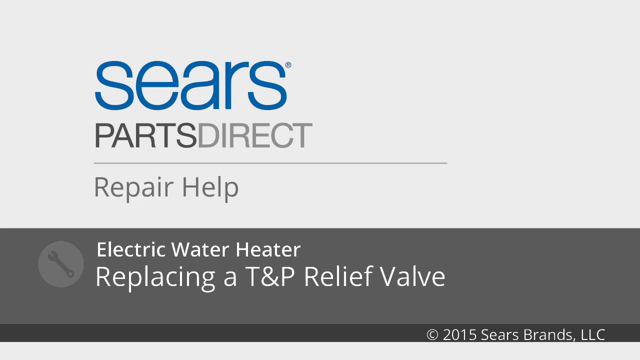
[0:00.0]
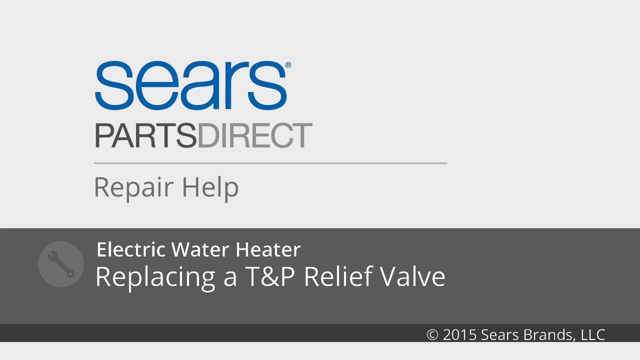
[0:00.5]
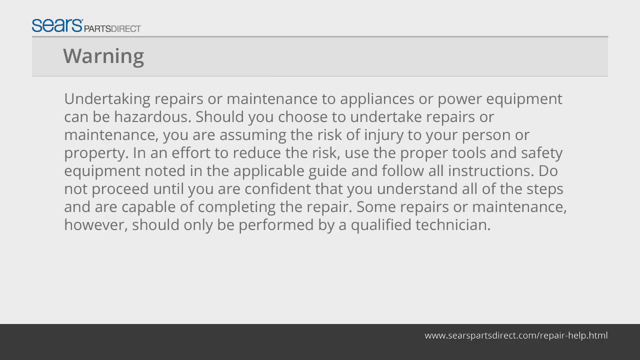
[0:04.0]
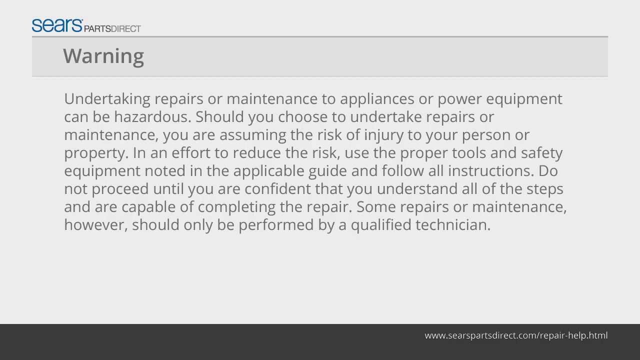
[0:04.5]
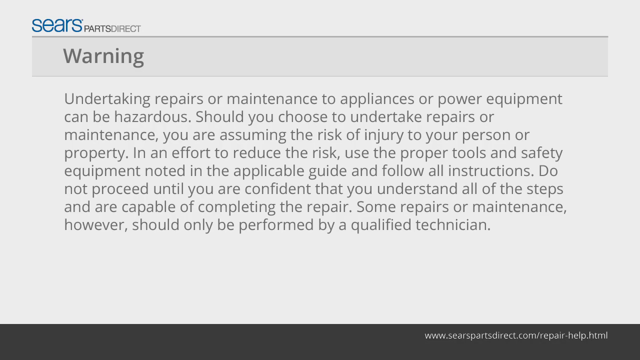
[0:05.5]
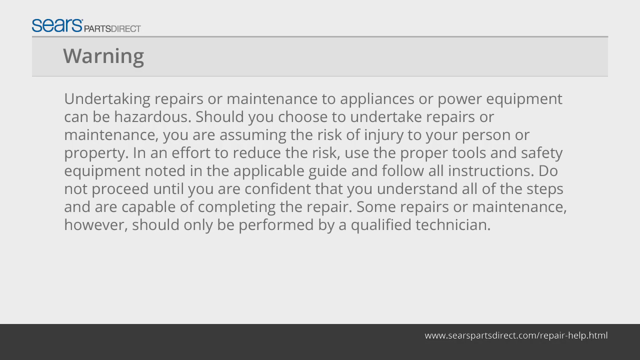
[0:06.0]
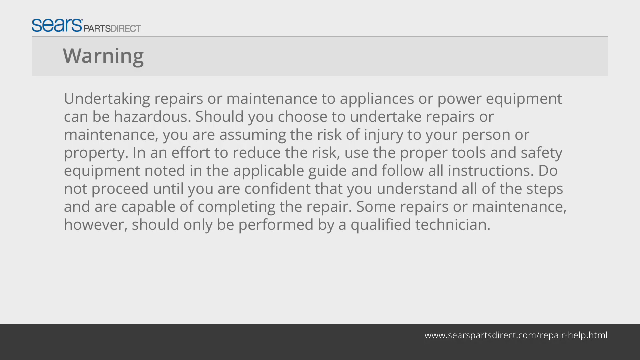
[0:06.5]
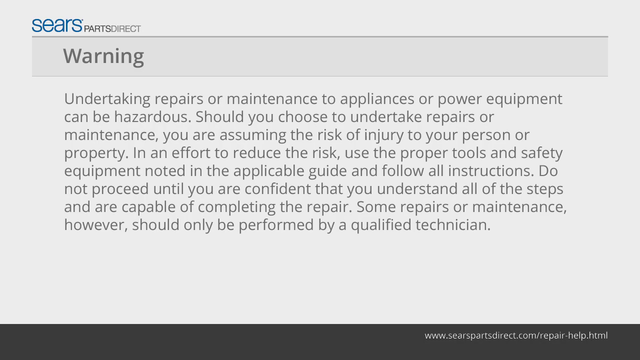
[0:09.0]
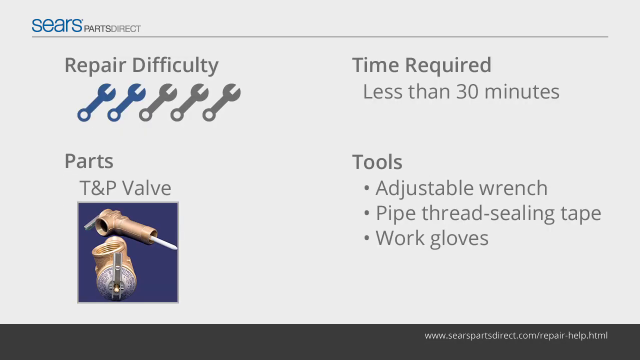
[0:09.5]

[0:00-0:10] Against a gray and white background, the word "Sears" appears in blue text at the top of the screen, with "Parts Direct" in black and gray text beneath it. A gray line runs below that, and underneath it reads "Repair help." In a black border section along the bottom of the screen, white text reads "Electric water heater," with "Replacing a TMP relief valve" beneath it, and to the left is a small icon that looks like a wrench. This screen stays up for a couple of seconds before changing to a different screen. It again has "Sears" in blue at the top, with a gray line across the top. Beneath that is the word "Warning," followed by a paragraph describing the warning. Then, for a split second, another graphic appears, still with "Sears" at the top, and beneath it four sections: "Repair difficulty," "Time required," "Parts," and "Tools."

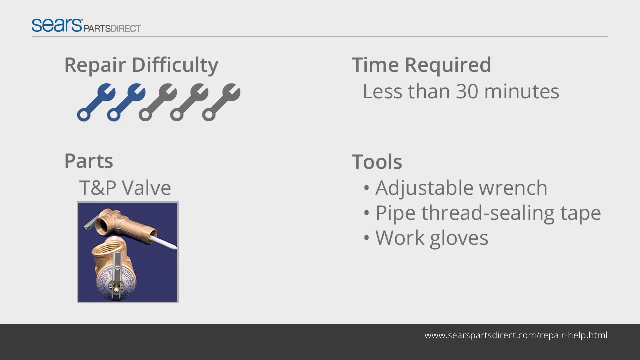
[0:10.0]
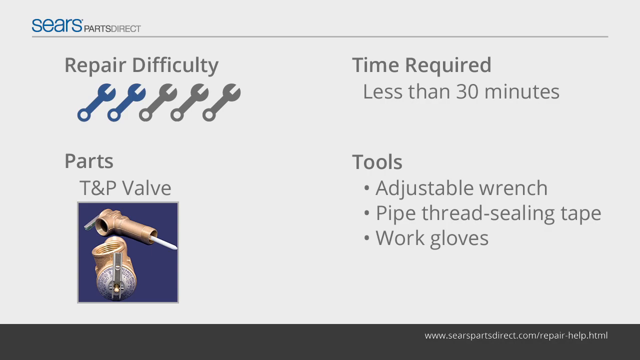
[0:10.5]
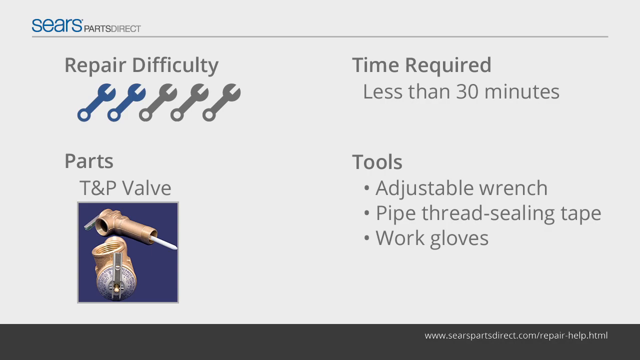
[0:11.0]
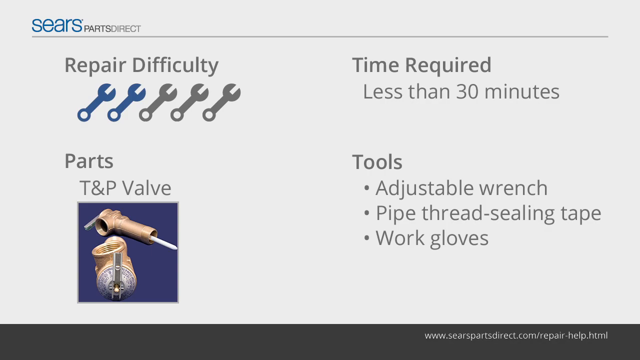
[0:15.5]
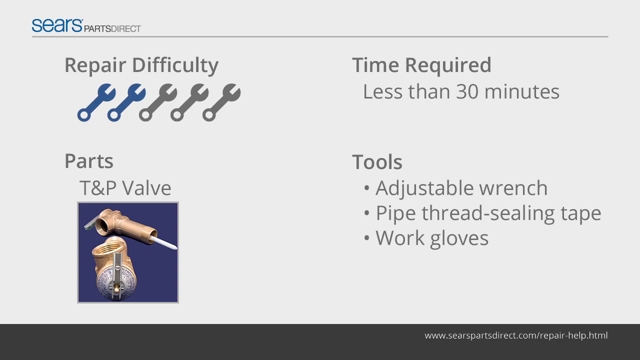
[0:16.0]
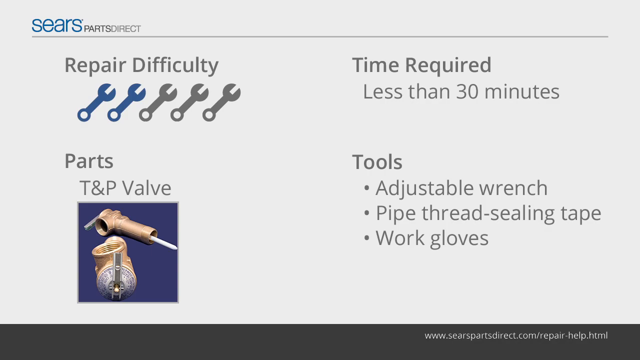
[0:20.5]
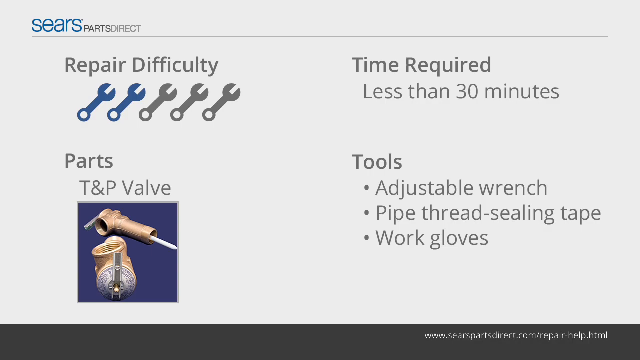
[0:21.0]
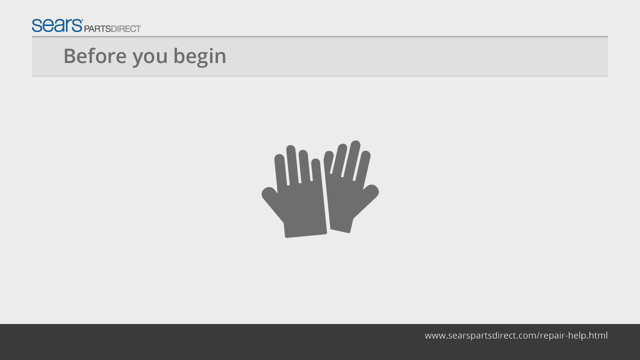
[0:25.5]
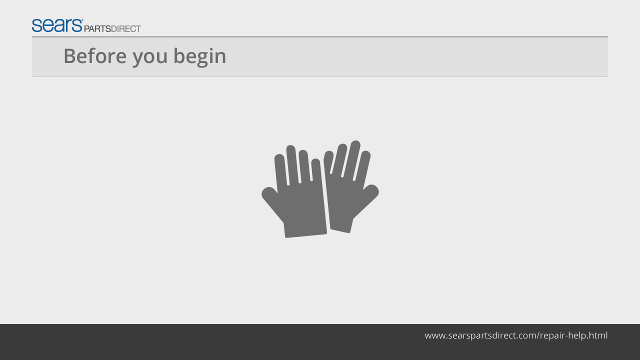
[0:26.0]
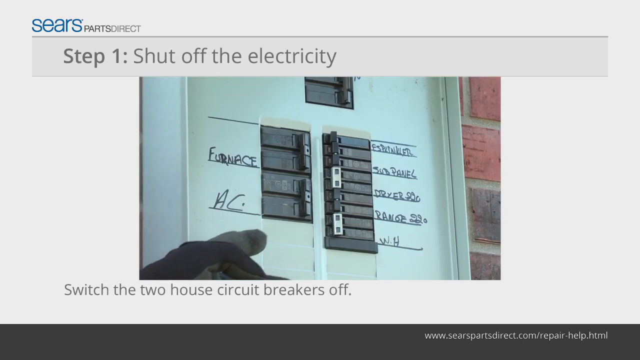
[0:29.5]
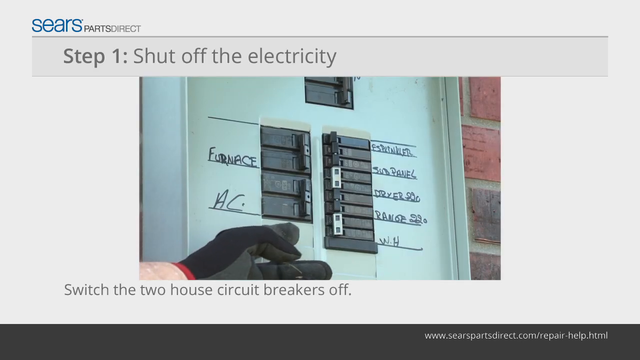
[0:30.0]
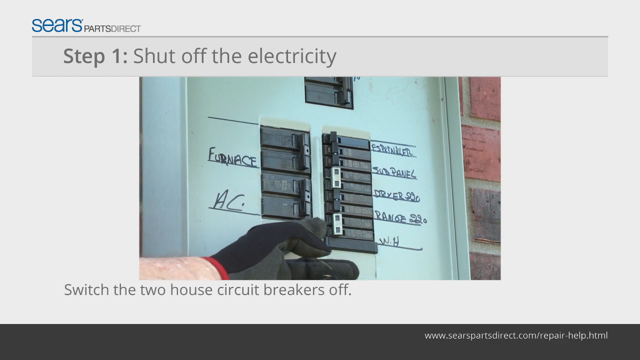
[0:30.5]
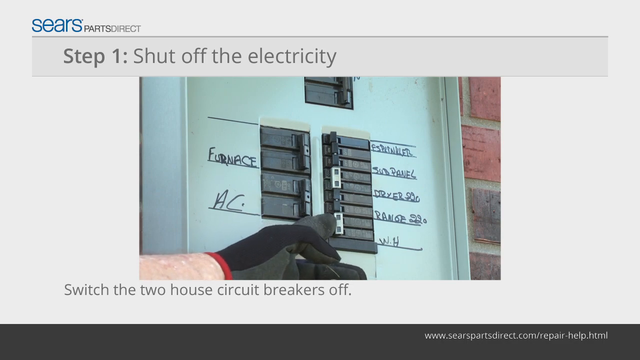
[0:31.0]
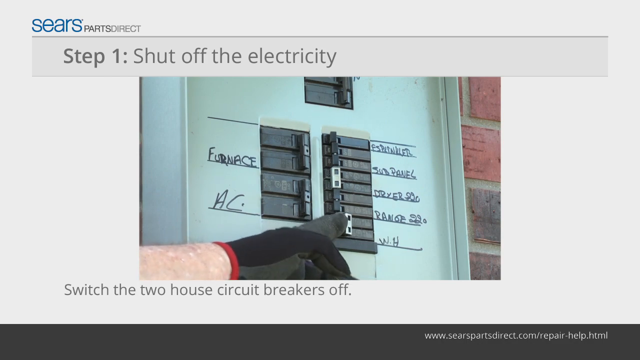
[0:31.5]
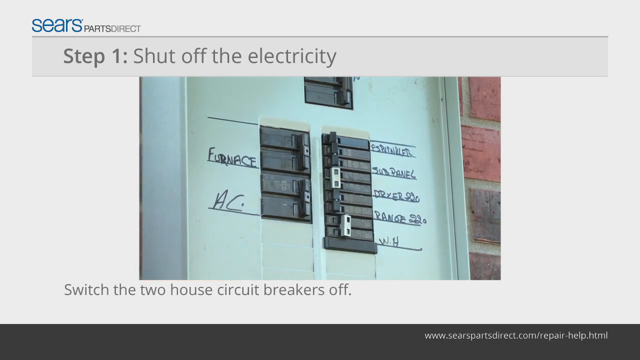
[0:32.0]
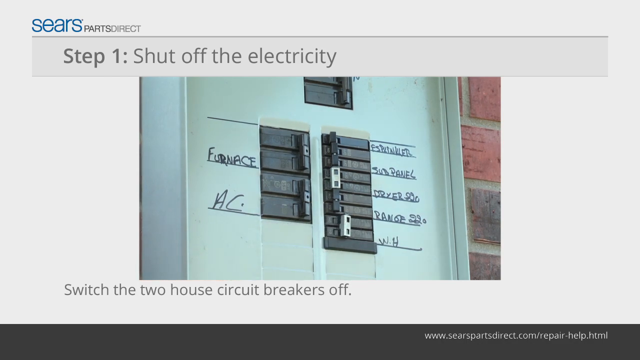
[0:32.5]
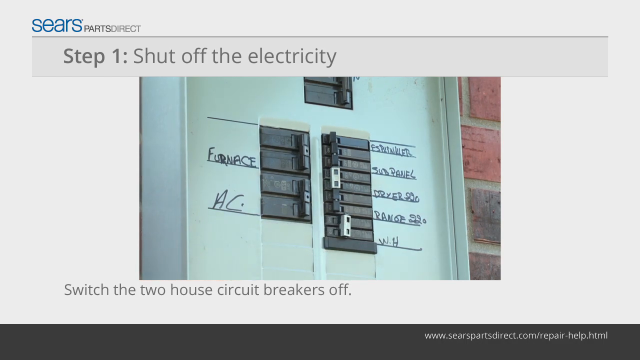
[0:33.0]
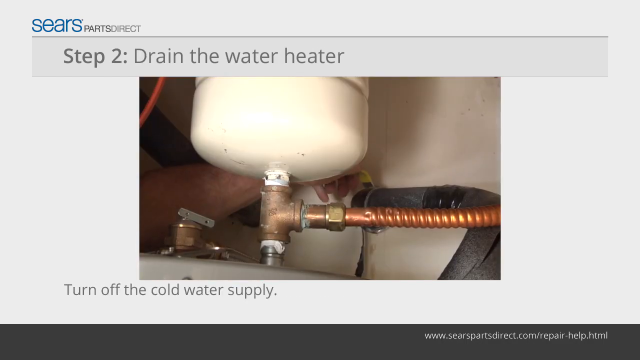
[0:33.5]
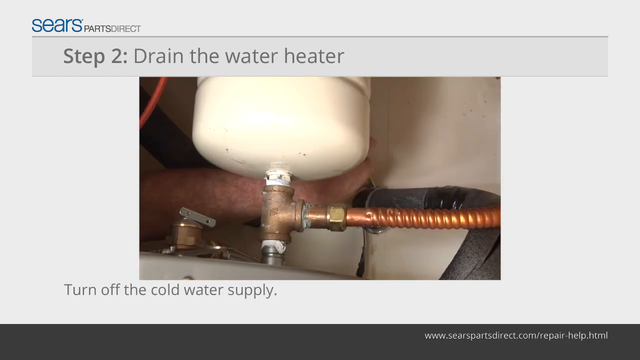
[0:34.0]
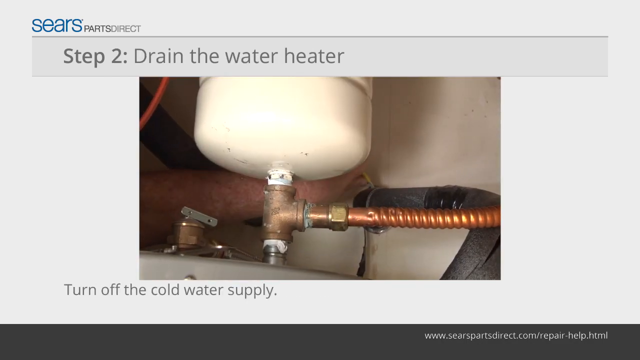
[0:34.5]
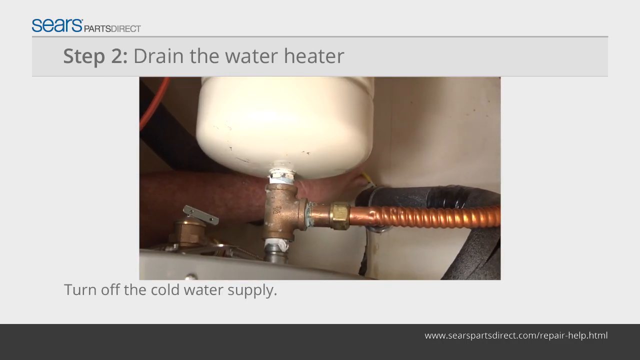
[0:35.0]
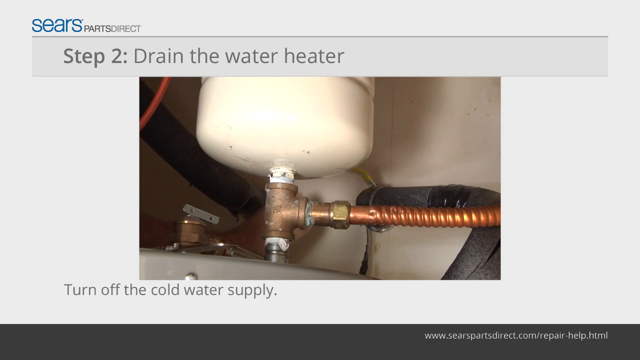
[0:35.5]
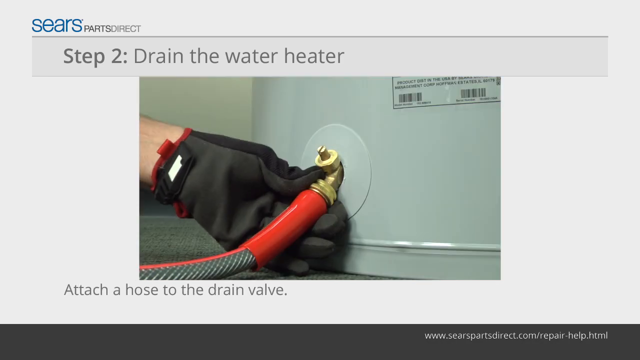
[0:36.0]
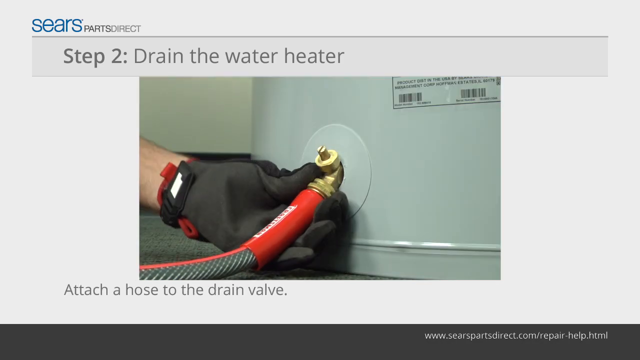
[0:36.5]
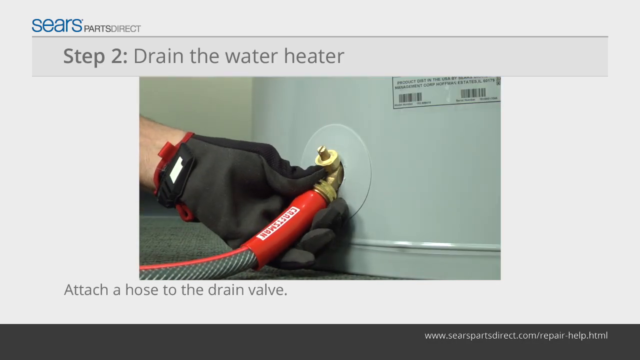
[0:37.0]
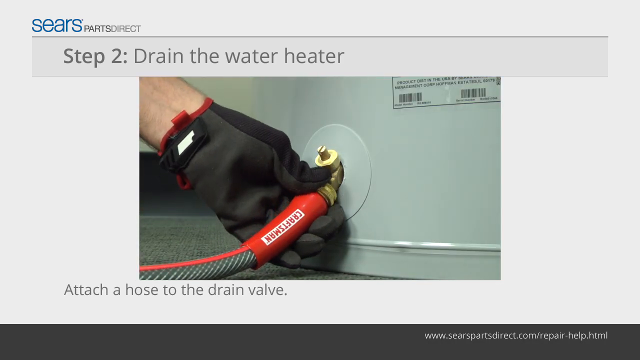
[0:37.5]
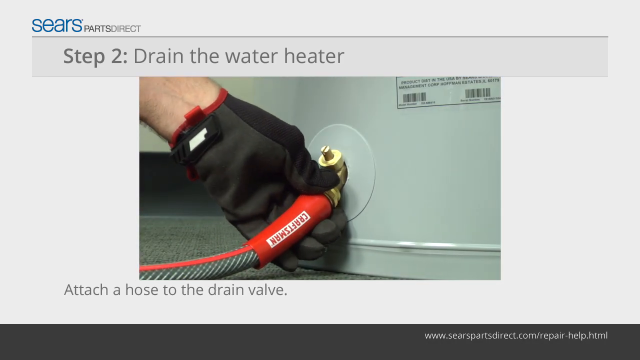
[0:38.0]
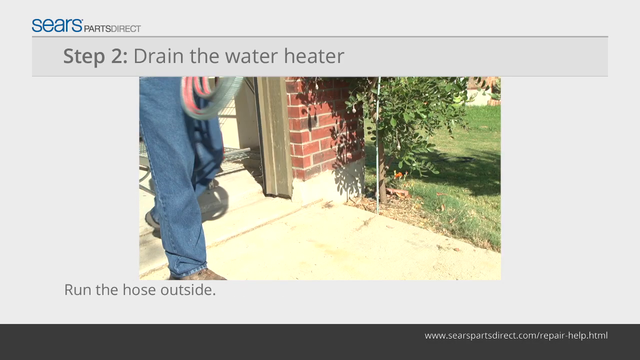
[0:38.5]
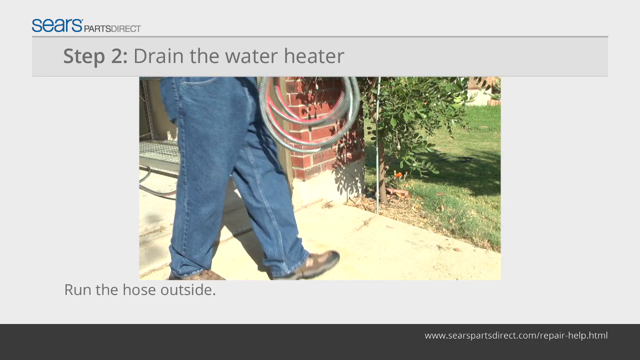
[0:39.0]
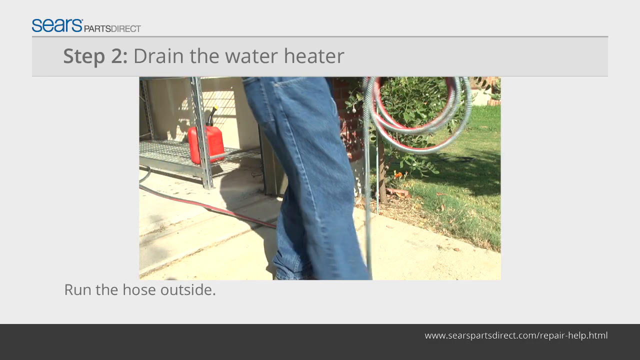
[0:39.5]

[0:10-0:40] The word "Sears" in blue letters sits in the upper left-hand corner, and to its right it reads "Parts Direct." A gray line runs underneath, and below are four sections. Under "Repair difficulty" there are five wrenches, two blue and three gray. Beneath that, "Parts" reads "TMP valve," with a photo of the valve. In the upper right, "Time required" states "less than 30 minutes." Below that, "Tools" has three bullet points: "Adjustable wrench," "Pipe thread sealing tape," and "Work gloves." This static image stays on screen for several seconds with nothing moving. The video then changes: "Sears" is in the upper left-hand corner, and beneath it "Before you begin" appears in a gray banner area, along with a cartoon-like image of two raised hands, almost like a silhouette. This stays on screen for several seconds. Next, "Step 1, shut off the electricity" appears at the top, with a video beneath it of a fuse box and somebody shutting off the electricity to one area on the fuse box. The video then changes to "Step 2, drain the water heater," showing a plumber draining the water heater.